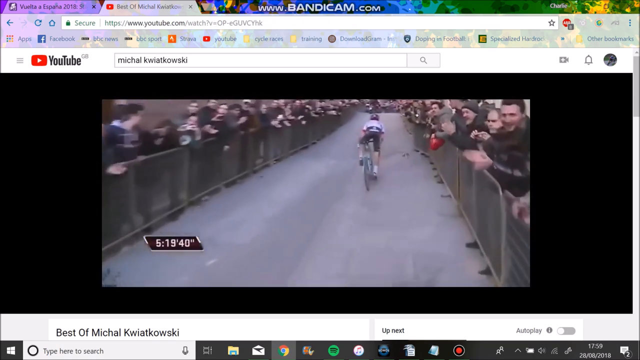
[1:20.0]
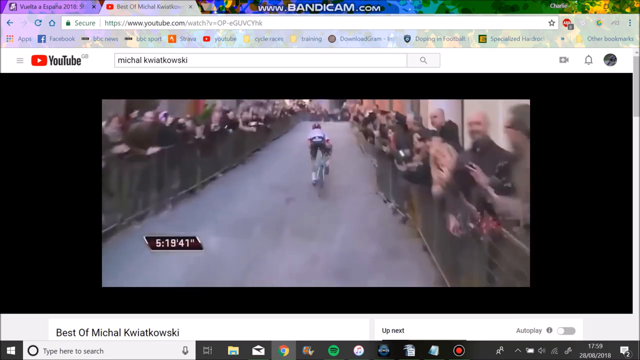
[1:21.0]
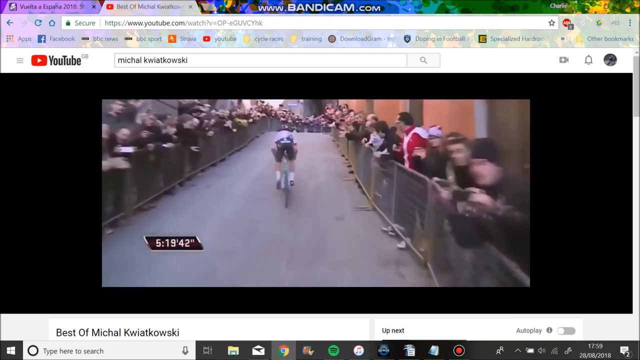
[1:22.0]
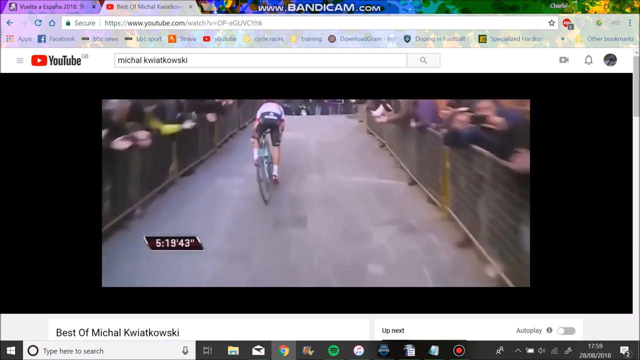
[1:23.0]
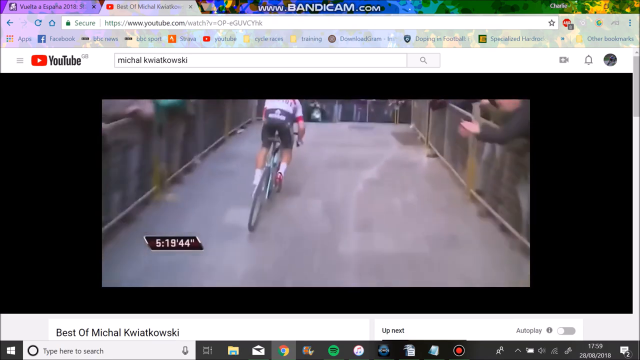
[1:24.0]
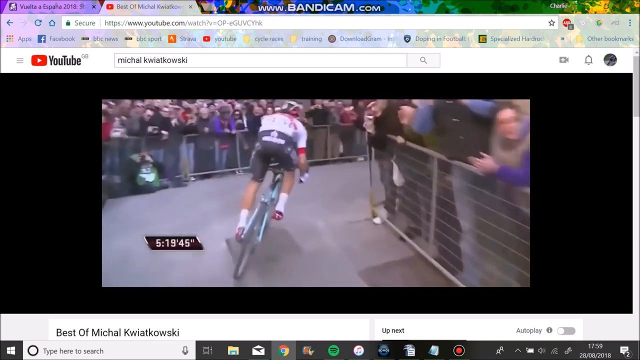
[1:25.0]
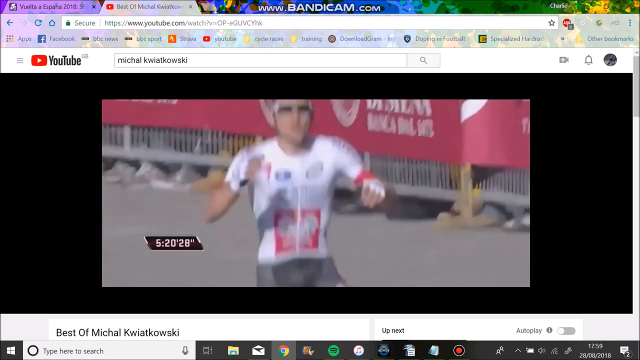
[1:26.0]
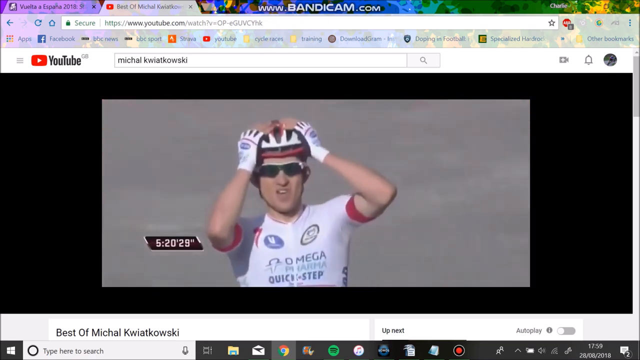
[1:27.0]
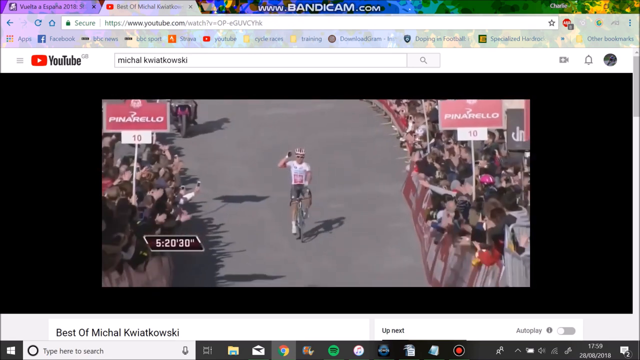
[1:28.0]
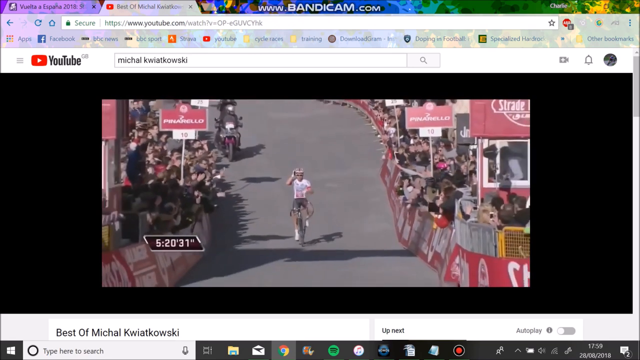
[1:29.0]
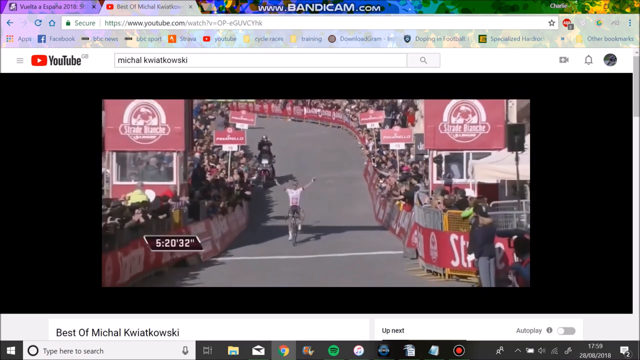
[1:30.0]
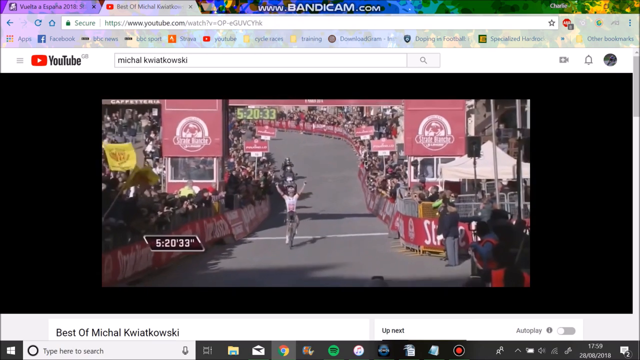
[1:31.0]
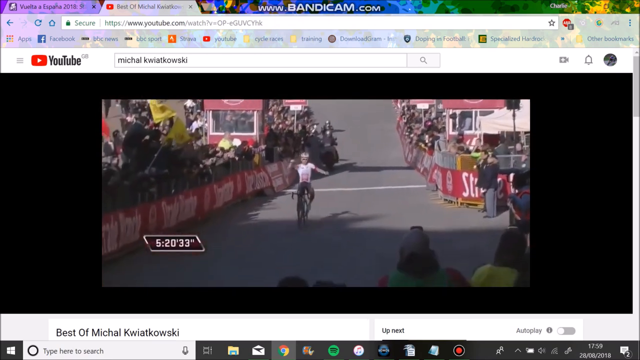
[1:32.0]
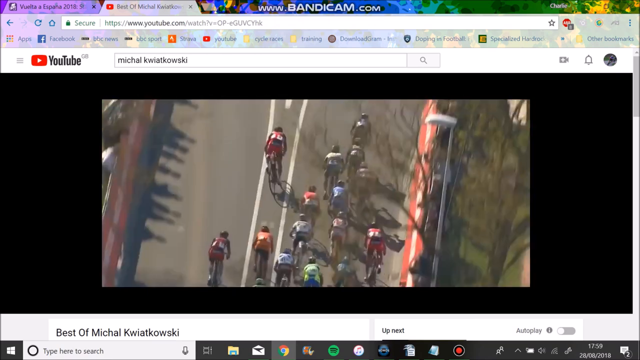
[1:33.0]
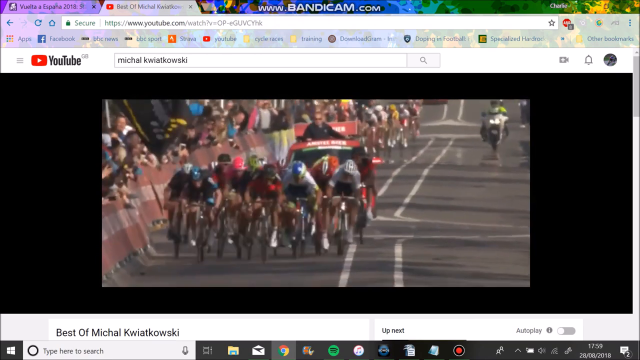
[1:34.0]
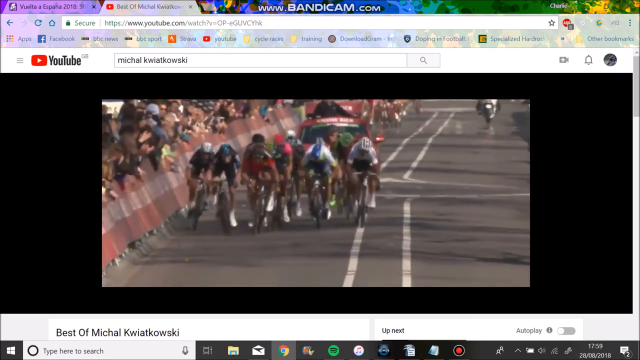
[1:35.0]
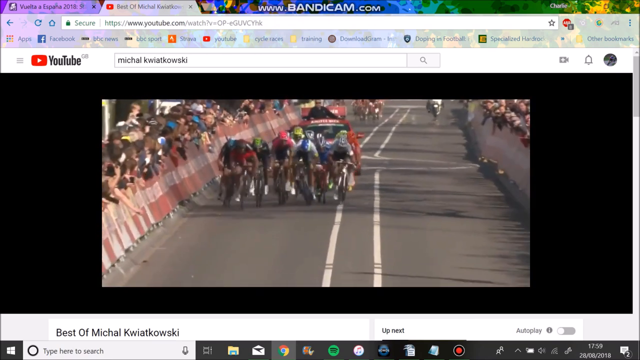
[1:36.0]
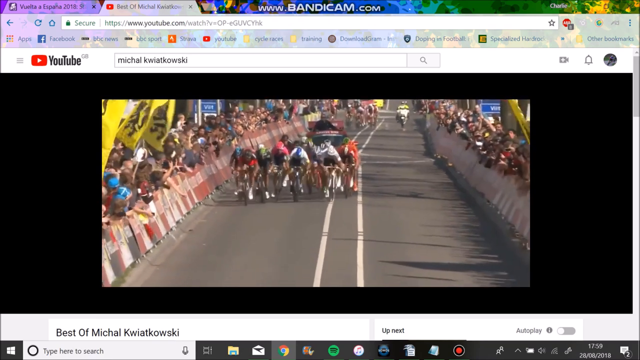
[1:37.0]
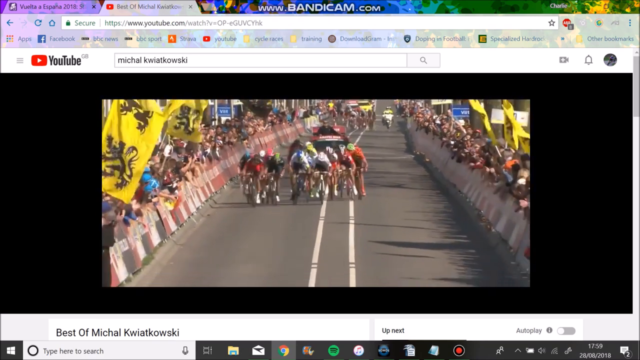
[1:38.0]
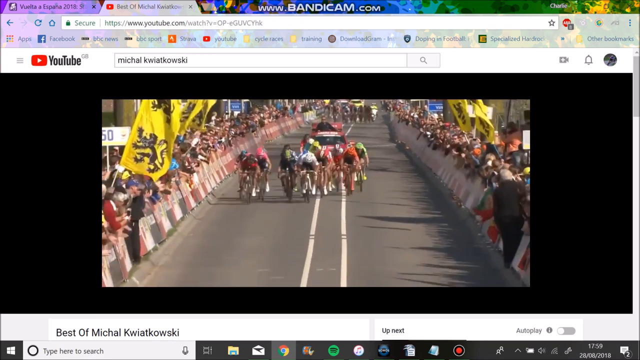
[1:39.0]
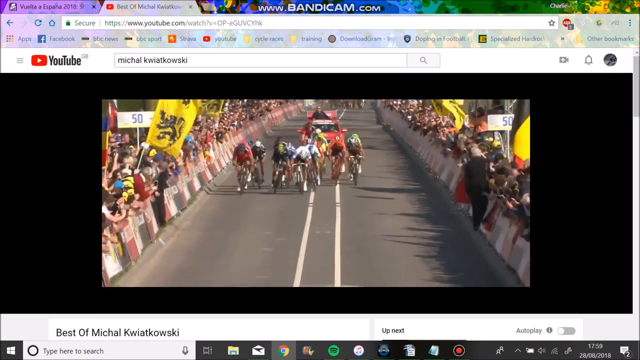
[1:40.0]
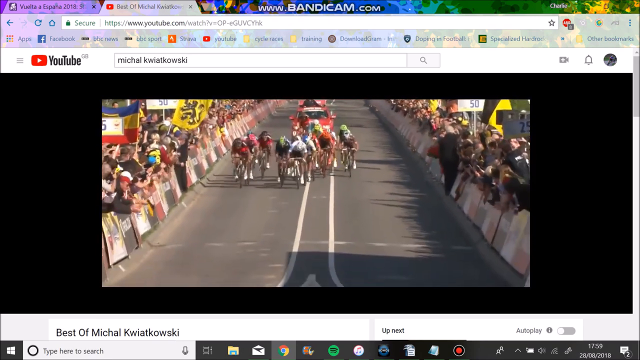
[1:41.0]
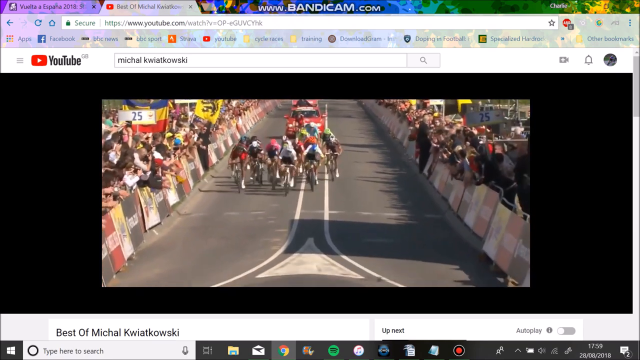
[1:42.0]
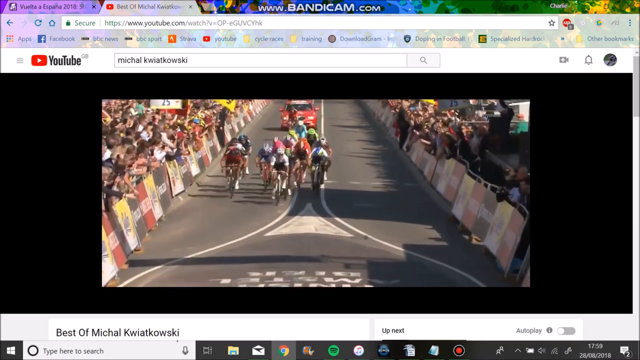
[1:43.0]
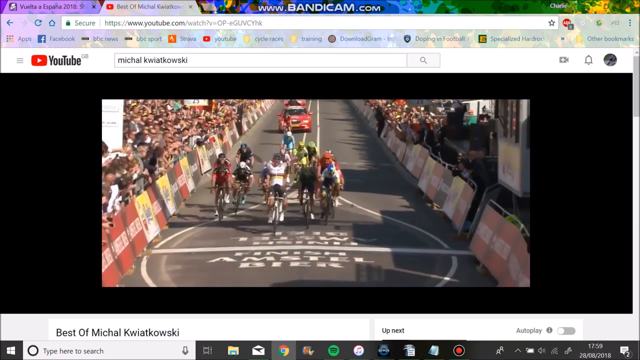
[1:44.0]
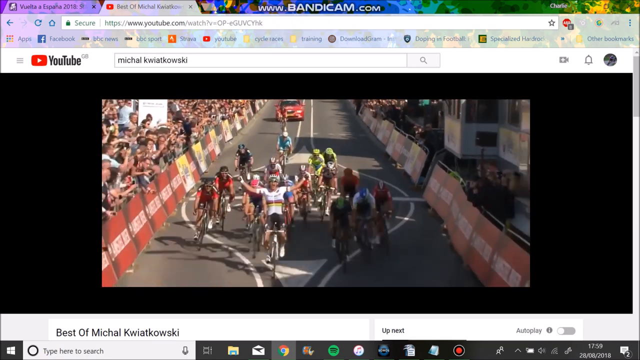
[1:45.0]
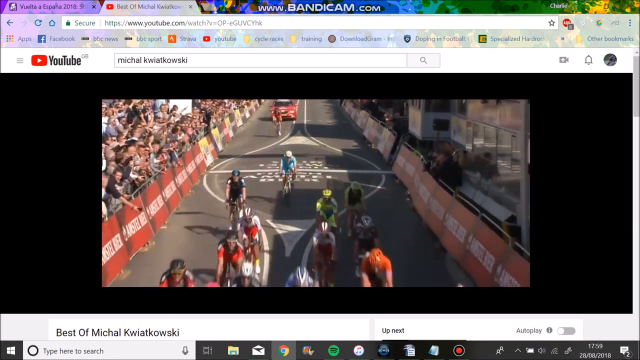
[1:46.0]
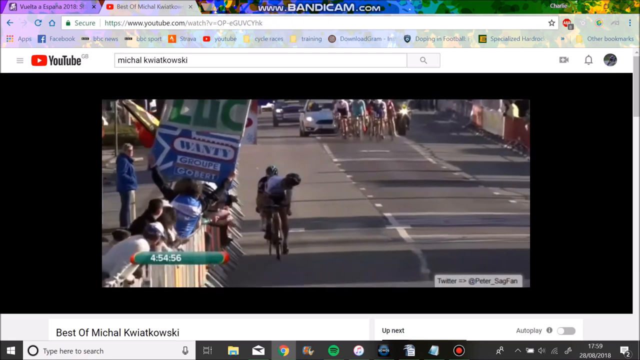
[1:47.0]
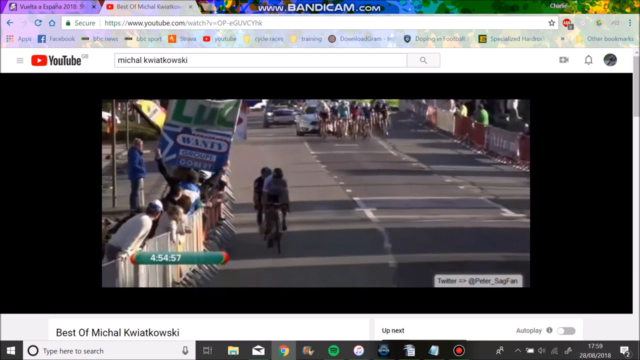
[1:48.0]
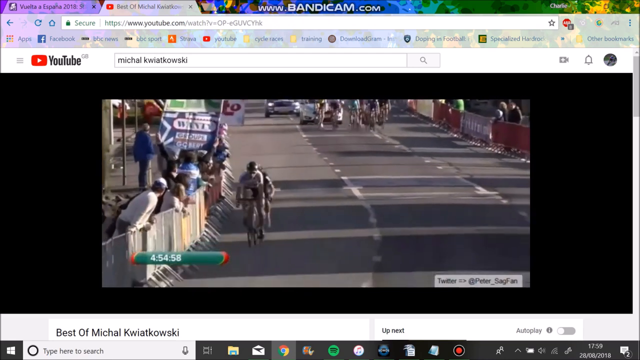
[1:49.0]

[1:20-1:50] The YouTube video continues with a view that appears to be first-person from one of the racers, showing another rider biking in front. It cuts to the leader continuing to ride and putting his hands on his head before he crosses the finish line. Next comes a view of many riders grouped and huddled right next to each other as they move, with a car driving behind them and large crowds on their left and right held back behind barriers along the lines. The rider at the front, wearing white, puts his hands up and cheers before he crosses. A number at the bottom left of the screen reads "454-57". Then two riders lead far ahead of the many others grouped up at their back right, with two cars driving behind them and a large group on the left behind the gates.